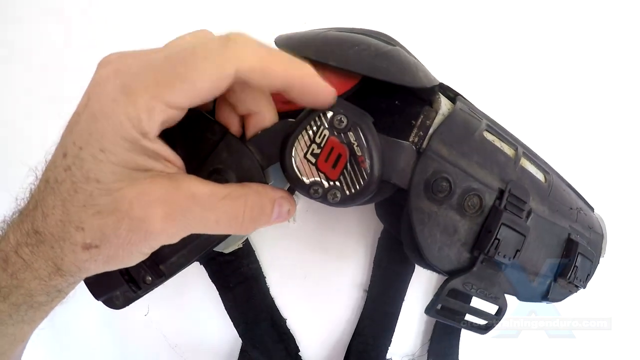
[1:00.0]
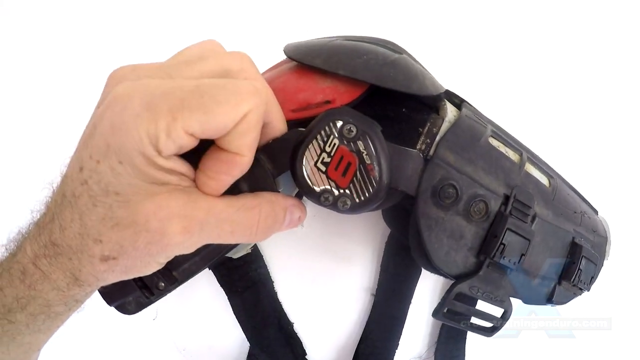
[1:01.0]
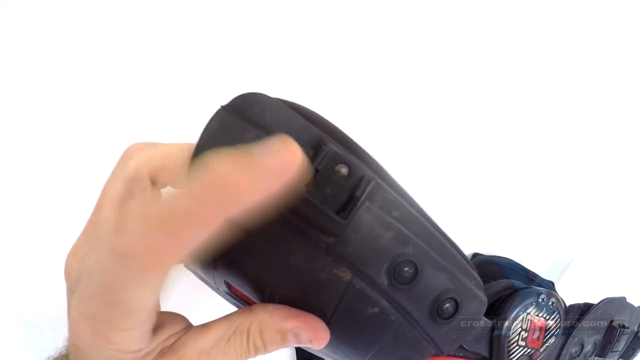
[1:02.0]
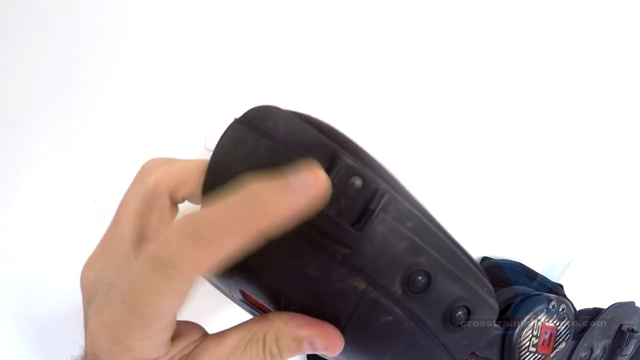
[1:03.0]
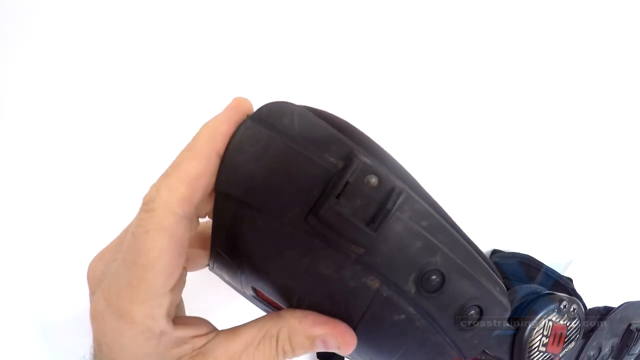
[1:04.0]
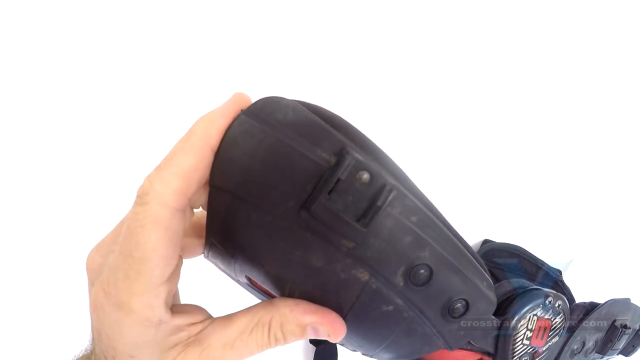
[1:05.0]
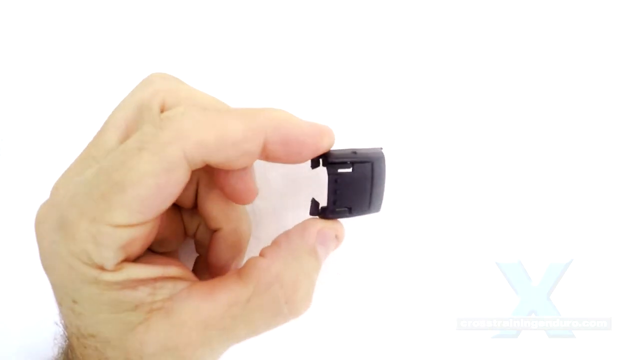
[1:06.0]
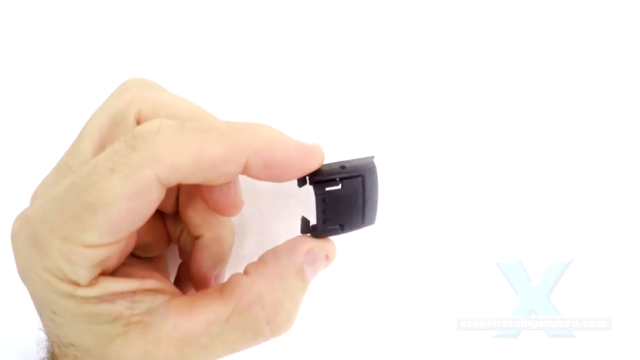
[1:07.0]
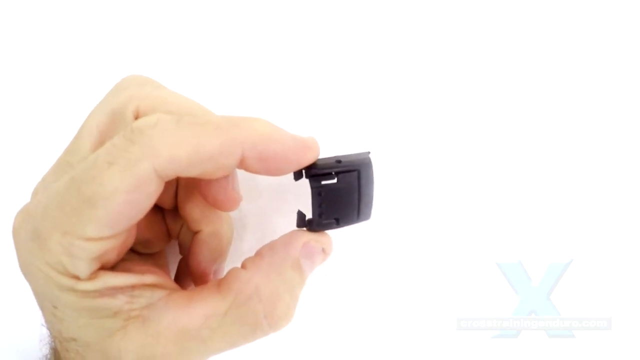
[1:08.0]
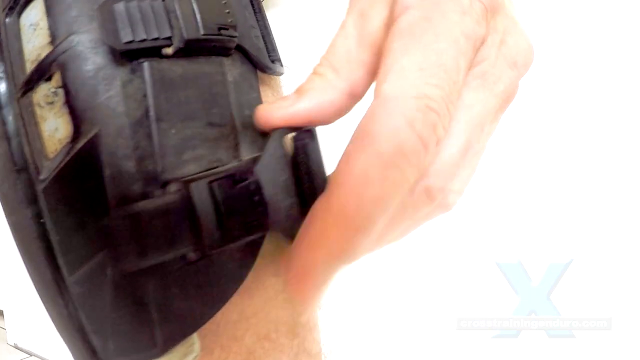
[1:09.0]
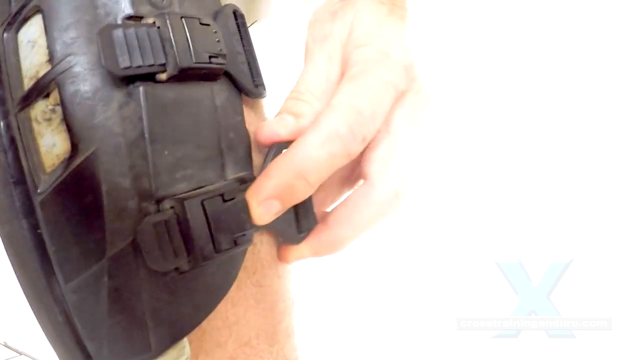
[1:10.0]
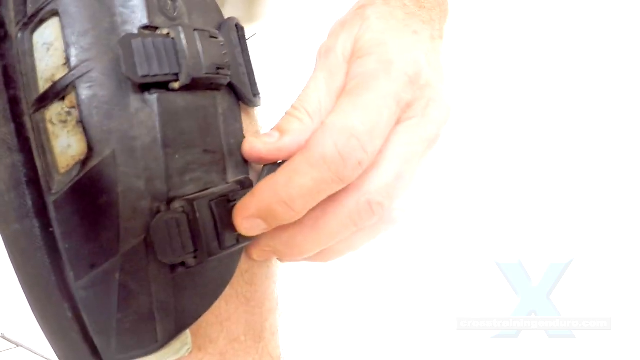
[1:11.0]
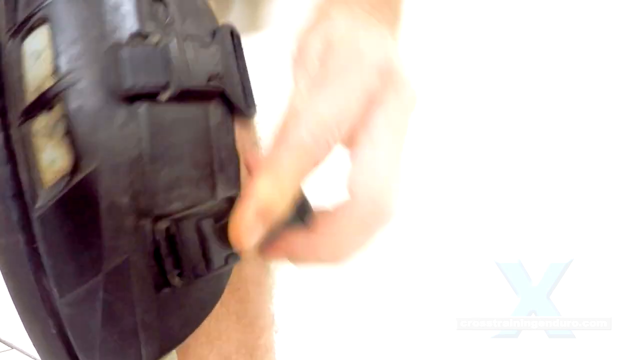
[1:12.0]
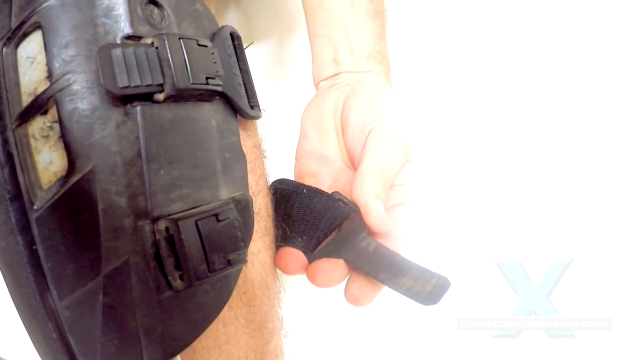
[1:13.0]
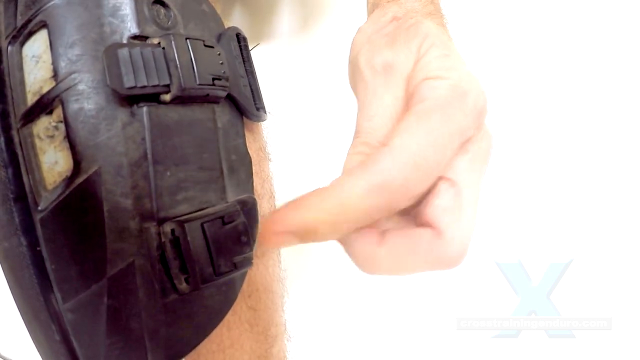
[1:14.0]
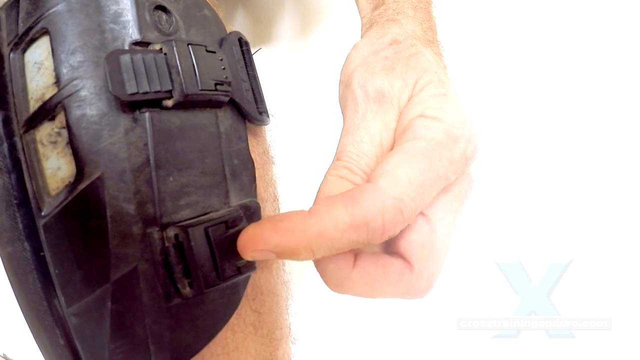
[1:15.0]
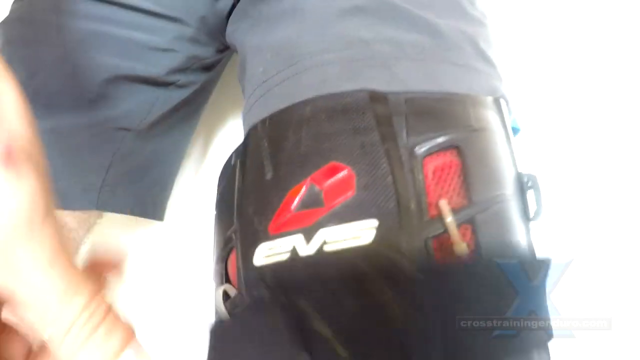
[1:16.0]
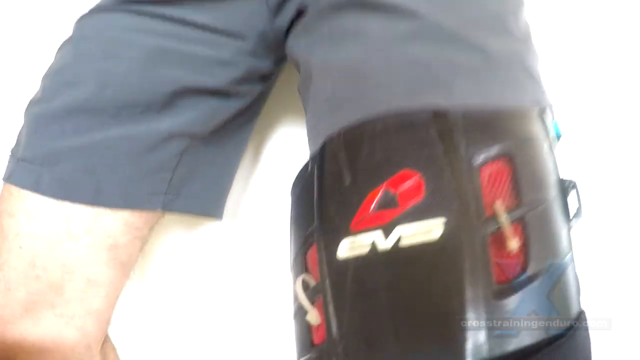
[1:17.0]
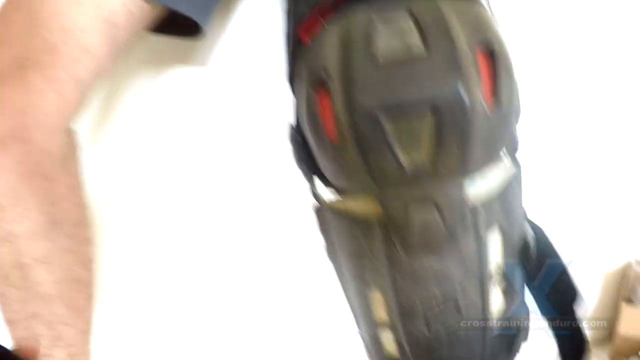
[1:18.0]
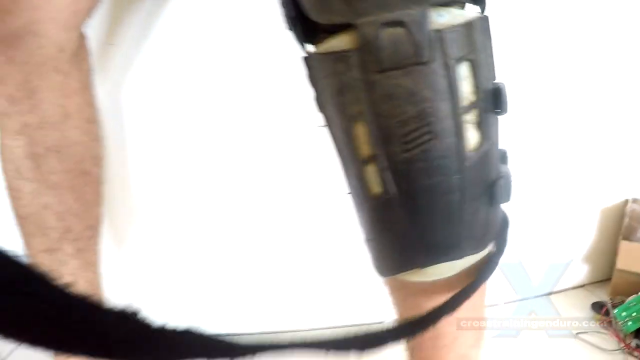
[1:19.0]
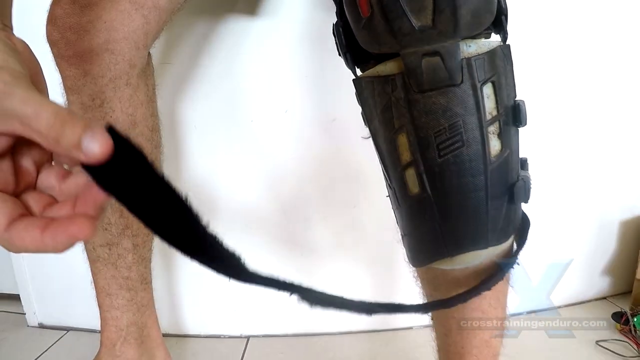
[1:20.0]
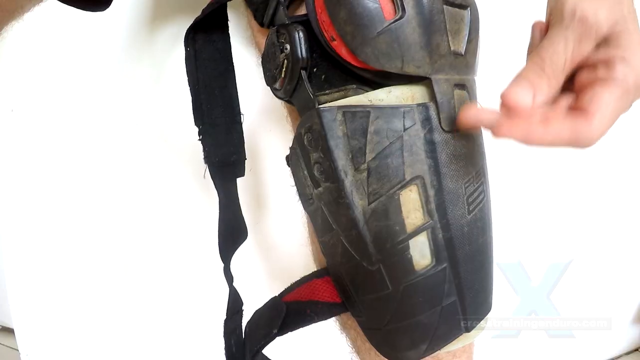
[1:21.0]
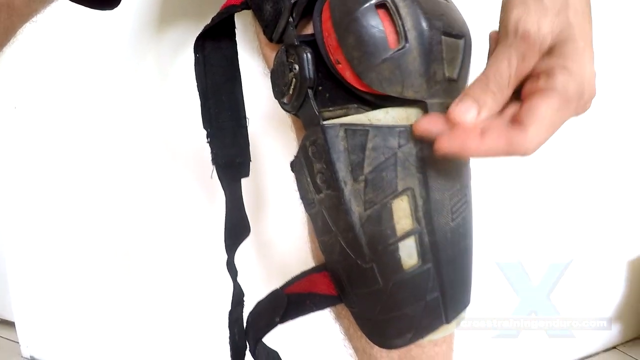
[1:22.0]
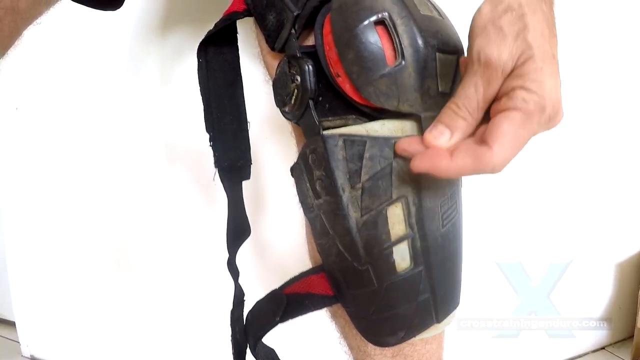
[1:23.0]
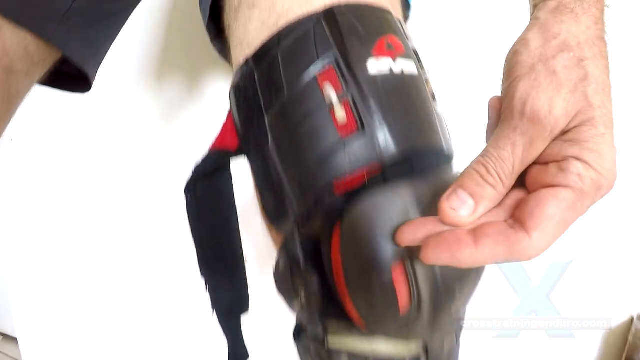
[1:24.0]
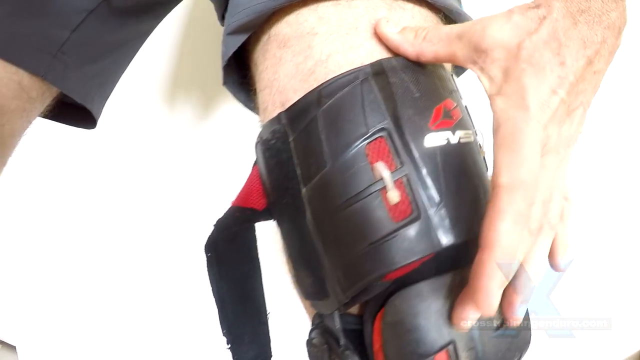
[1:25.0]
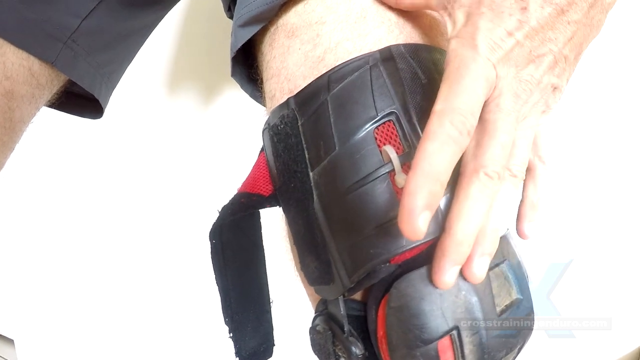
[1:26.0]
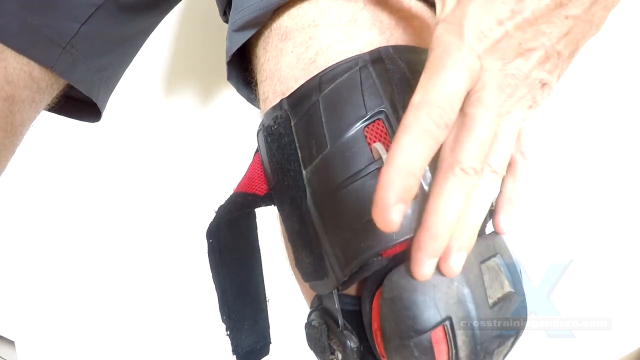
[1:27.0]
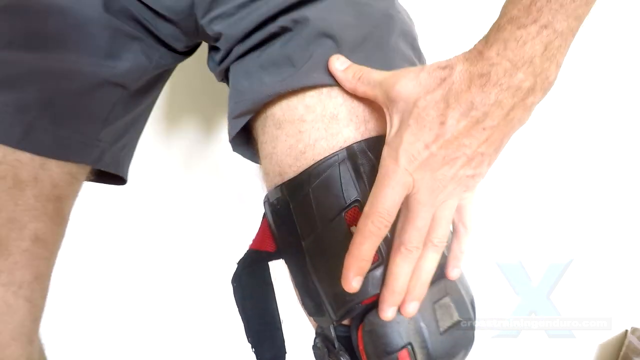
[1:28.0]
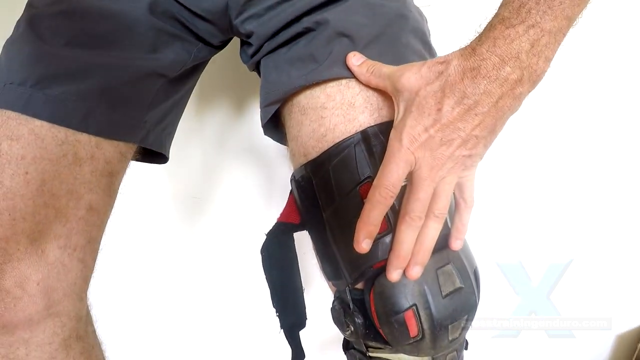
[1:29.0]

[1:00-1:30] The person holds the knee braces with his left hand and taps to show what might have gone wrong with the kneecap. He then shows a small square object with two holes on the side, holding it between his left index finger and thumb; it looks like the object has fallen off the knee brace. "EVS" is written on the knee brace. He tries to strap it on, but the strap is not working. Next, directions or instructions appear on how the knee brace is made and how to wear it, written in grey. A new piece appears that is all black with "CTI" in big, bold writing.